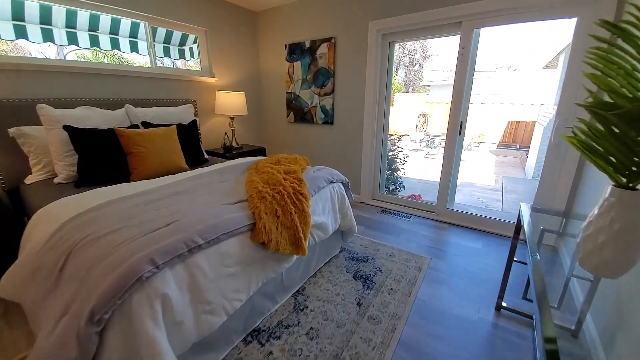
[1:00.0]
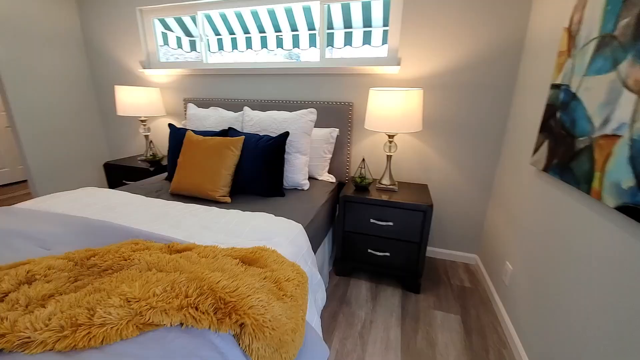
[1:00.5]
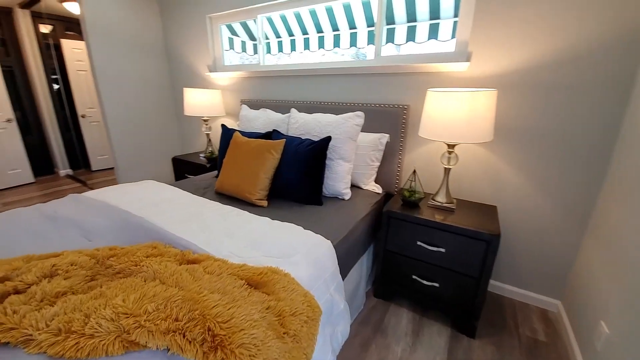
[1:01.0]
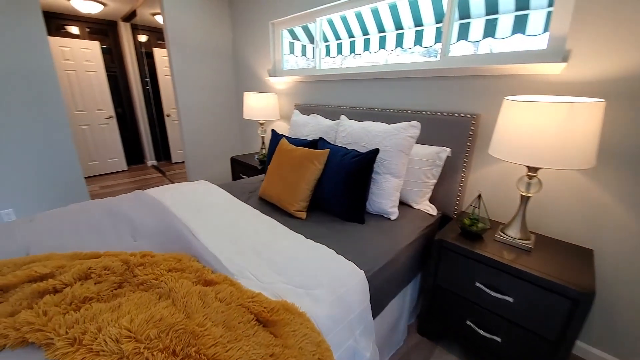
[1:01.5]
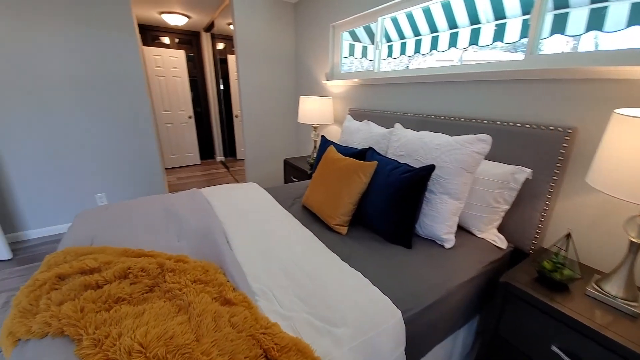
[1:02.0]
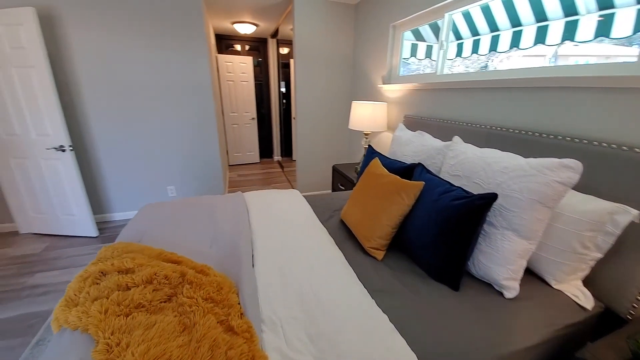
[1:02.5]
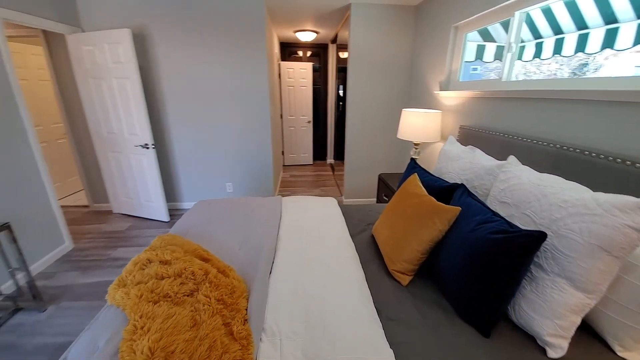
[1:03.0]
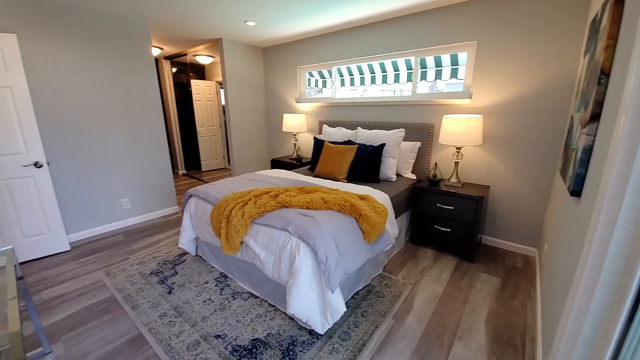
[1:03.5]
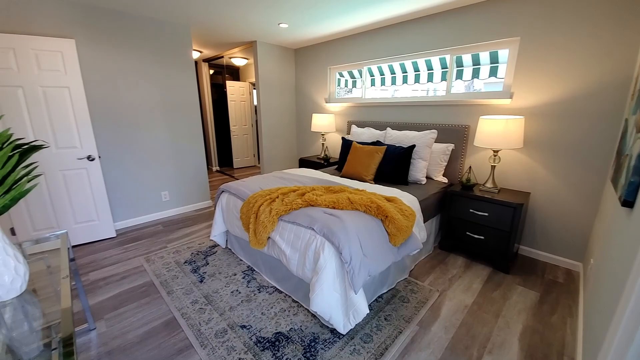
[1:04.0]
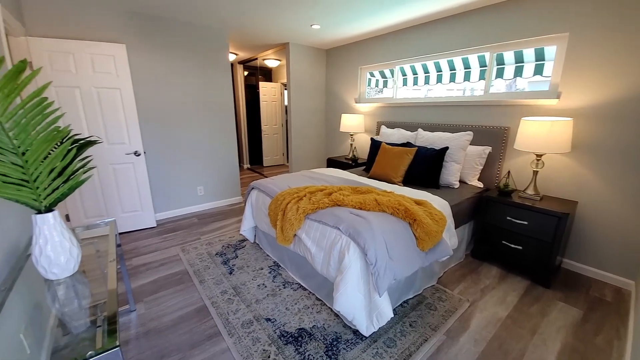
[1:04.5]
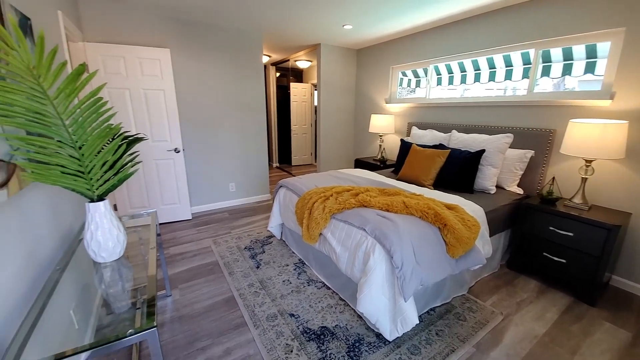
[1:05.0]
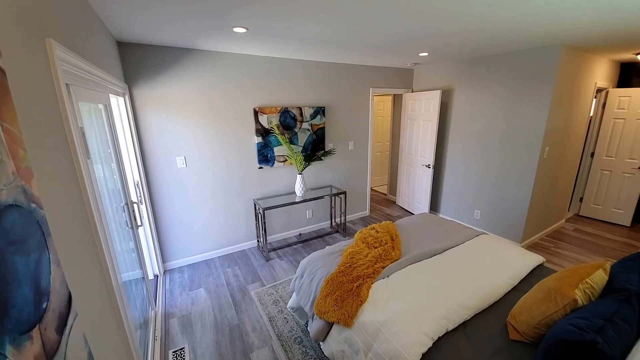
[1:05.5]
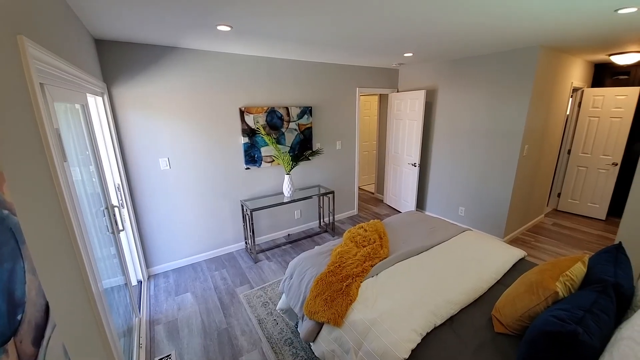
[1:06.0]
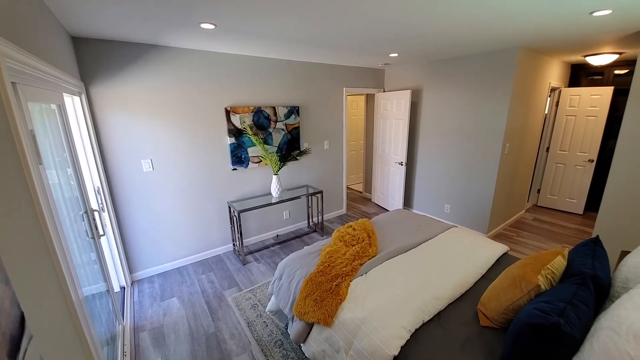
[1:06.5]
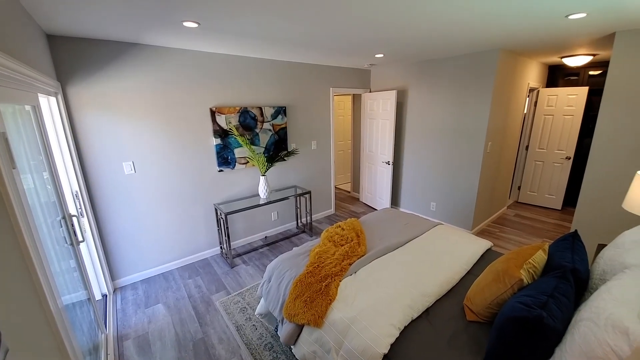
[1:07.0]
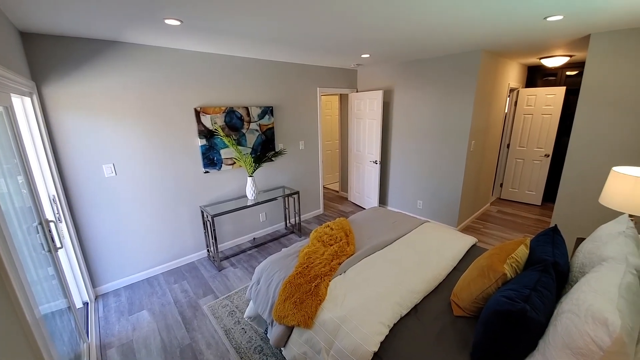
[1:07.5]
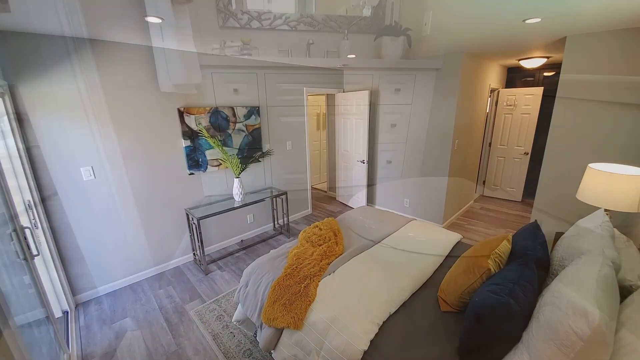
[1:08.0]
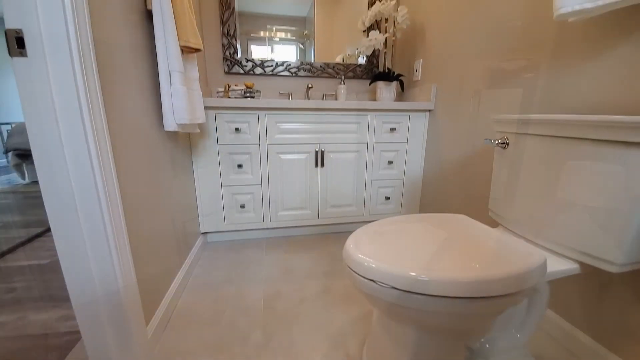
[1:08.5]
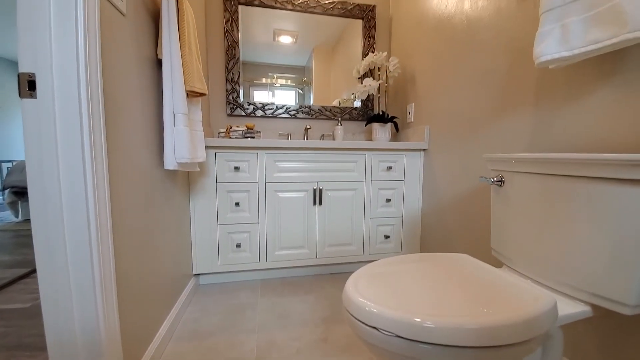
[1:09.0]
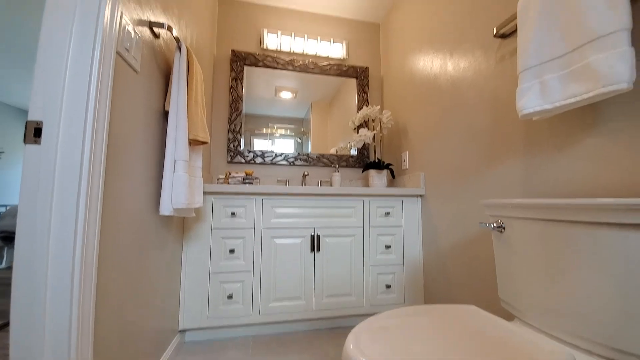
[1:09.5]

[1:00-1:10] The master bedroom and its attached bathroom are shown. The master bedroom is quite small, probably about 300 square feet, with a sliding glass patio door that leads to the backyard. The bathroom is very small, with a small toilet that appears somewhat old, a normal sink and a normal shower.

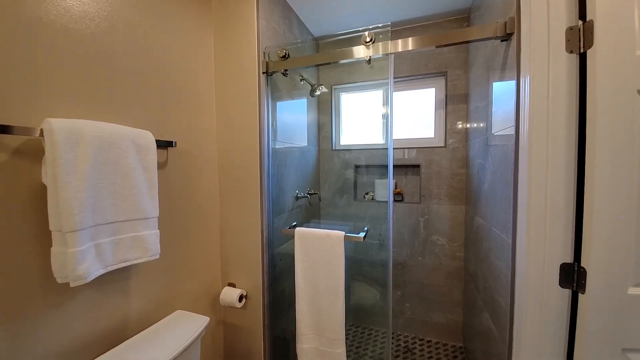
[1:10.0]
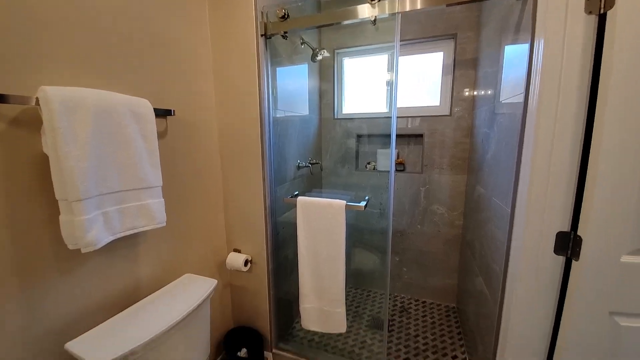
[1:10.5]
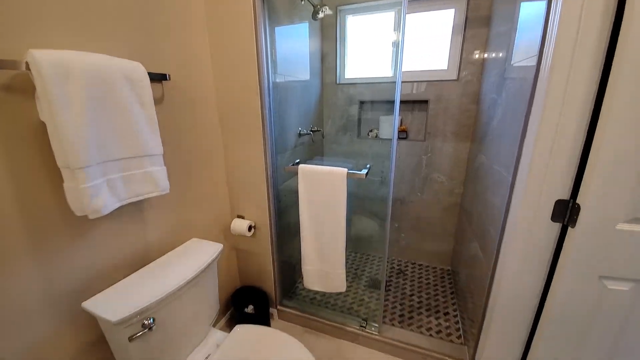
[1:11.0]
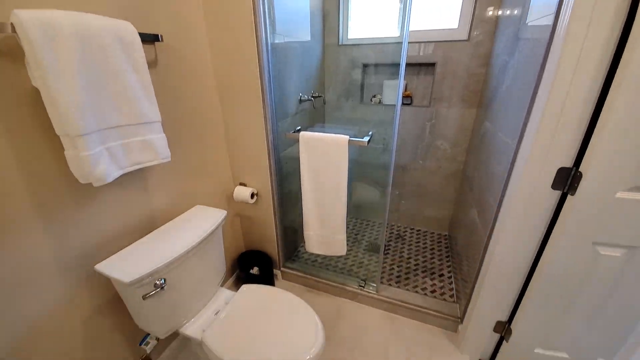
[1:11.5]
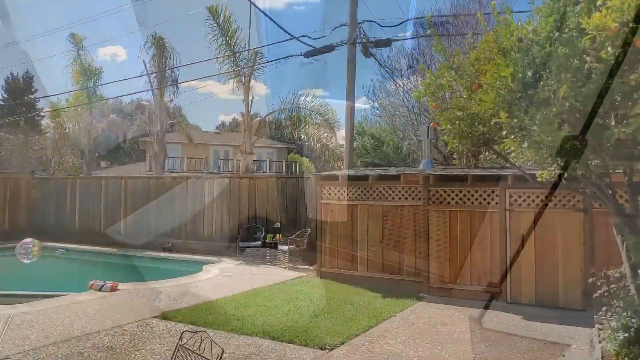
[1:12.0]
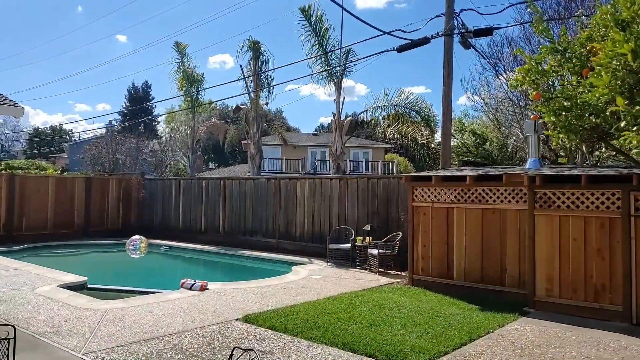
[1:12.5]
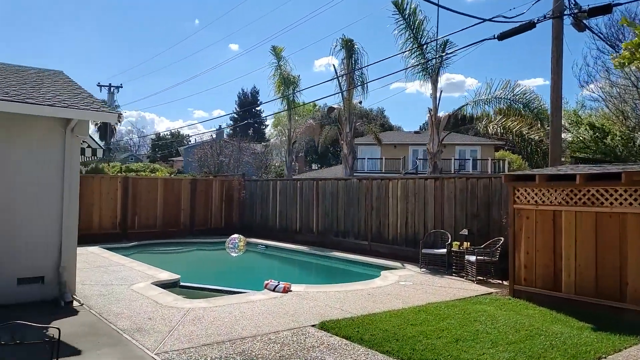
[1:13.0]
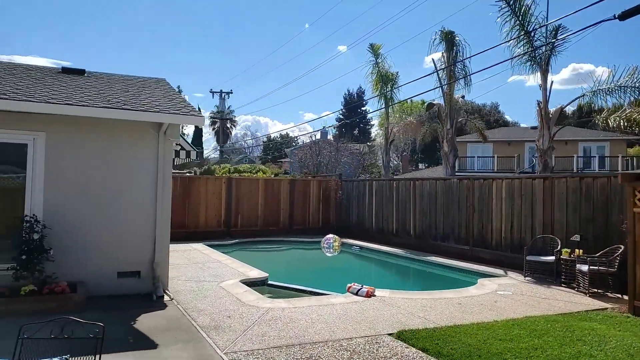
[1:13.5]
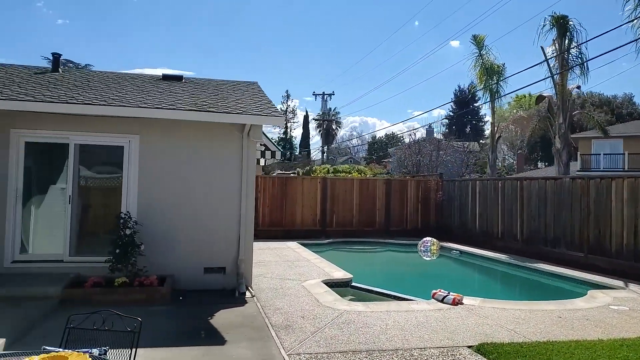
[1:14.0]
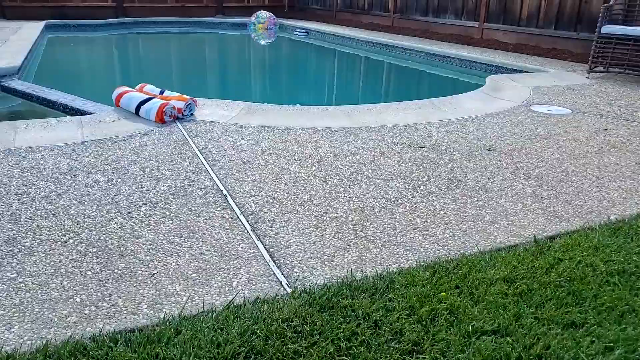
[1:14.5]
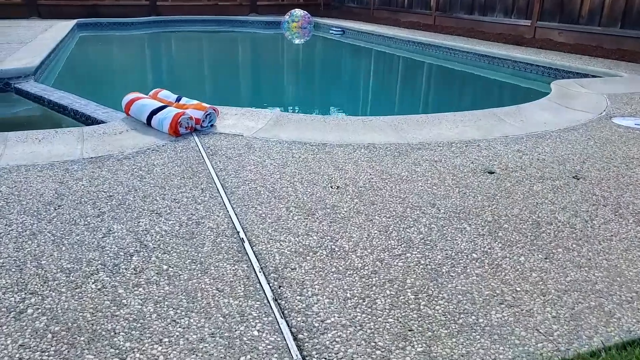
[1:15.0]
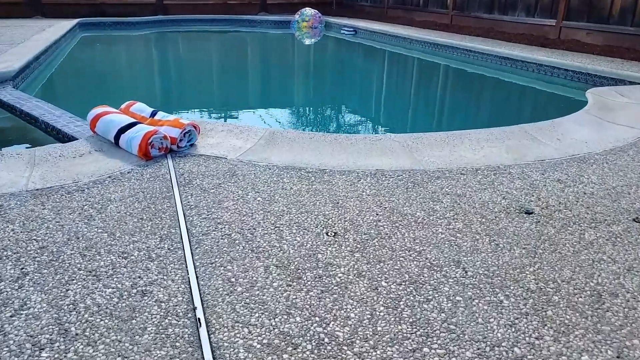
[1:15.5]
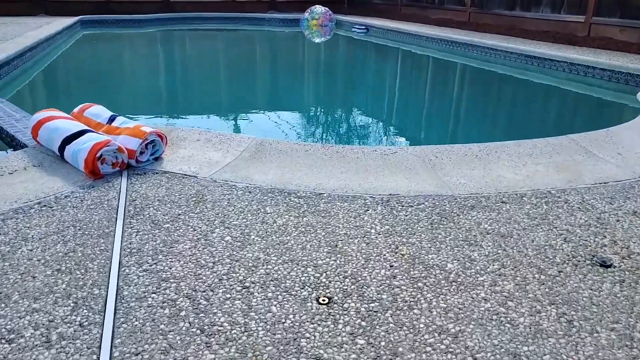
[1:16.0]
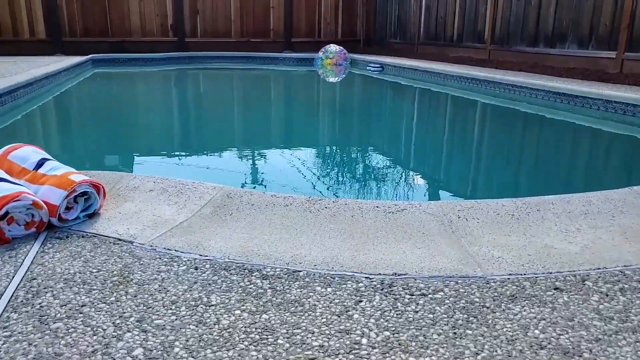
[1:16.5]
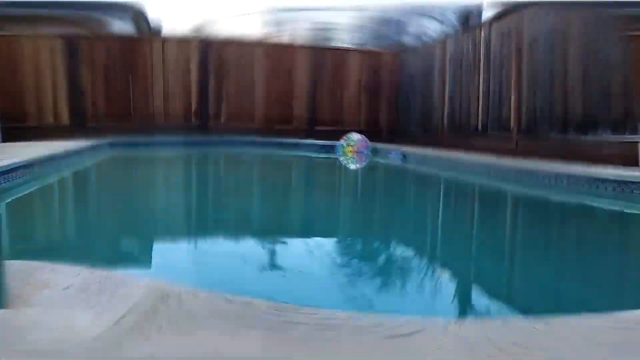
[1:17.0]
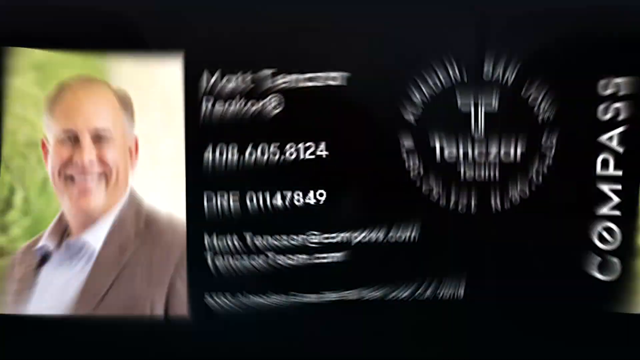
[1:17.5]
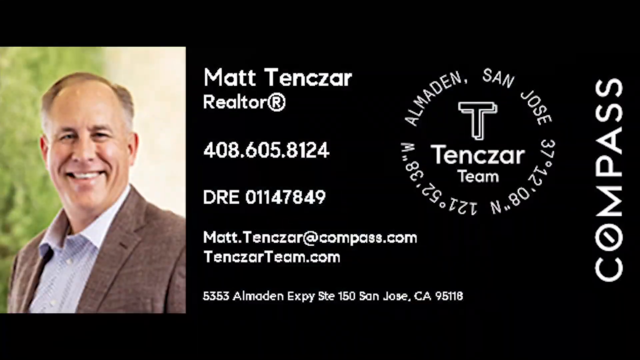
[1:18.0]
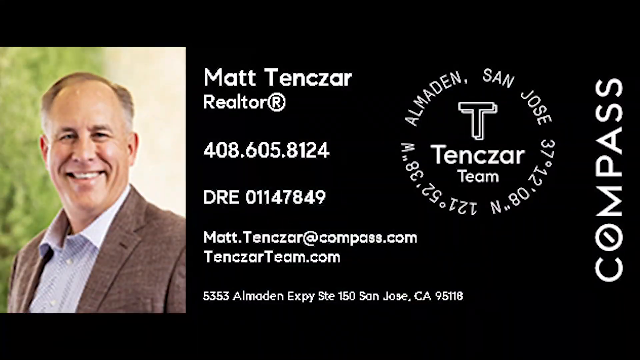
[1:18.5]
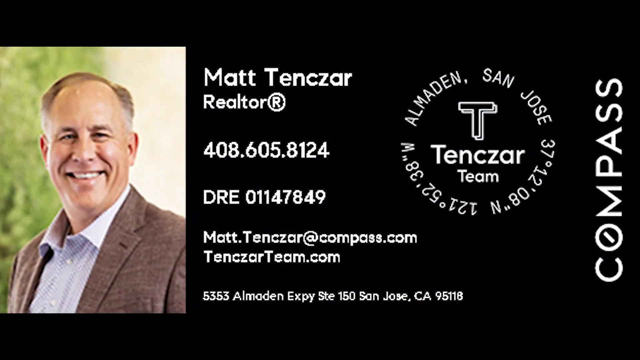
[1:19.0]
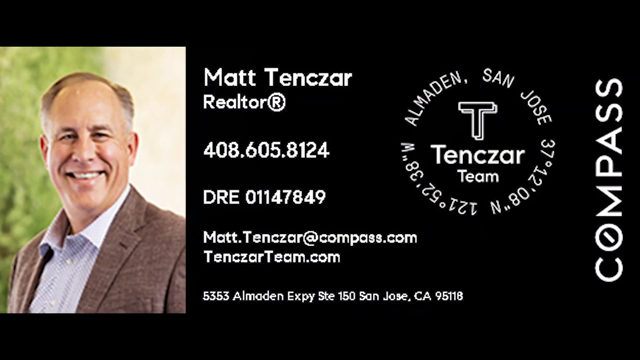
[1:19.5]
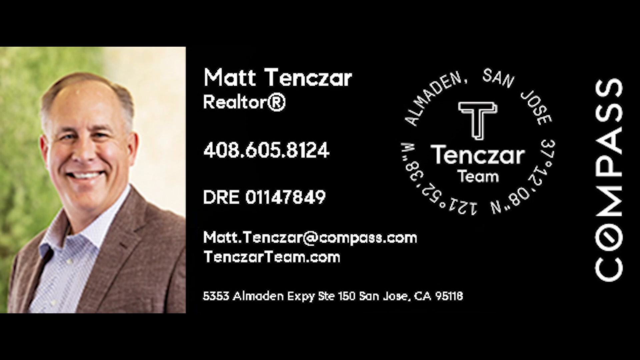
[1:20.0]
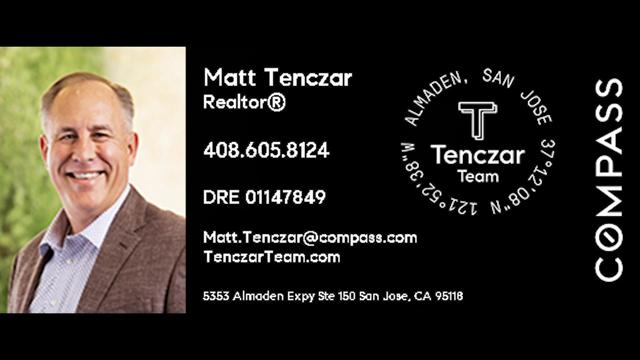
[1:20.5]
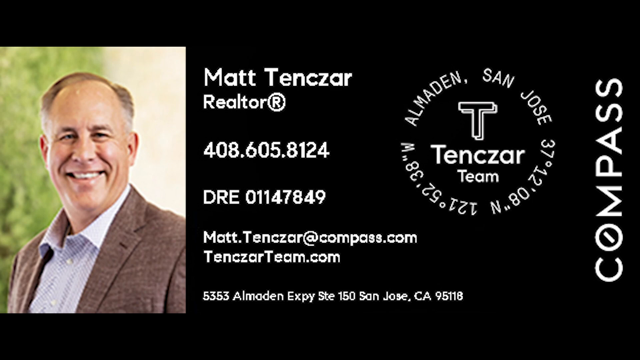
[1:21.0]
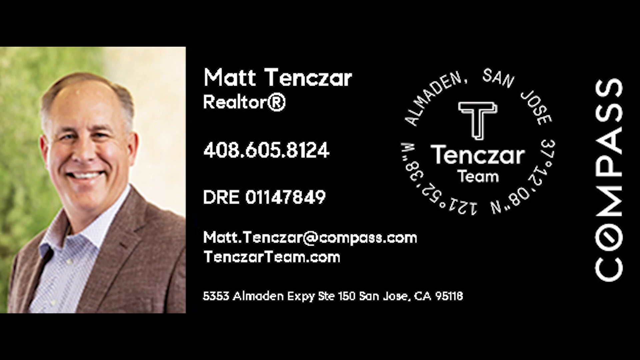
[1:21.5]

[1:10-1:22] More of the nicely remodeled but very small house is shown. A shower has a stone backing and a glass enclosure, with the wheels for moving the sliding glass door at the top of the door. Finally, the realtor's information appears: the realtor is Matt Tenczar, who owns his own company, the Tenczar team, located in San Jose, and has a realtor license.